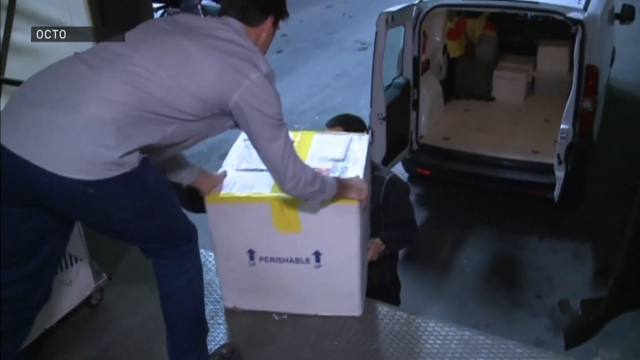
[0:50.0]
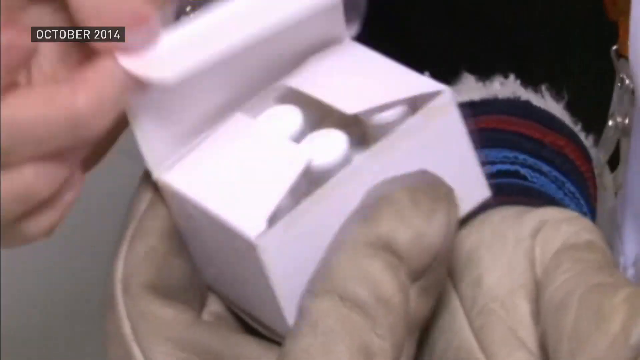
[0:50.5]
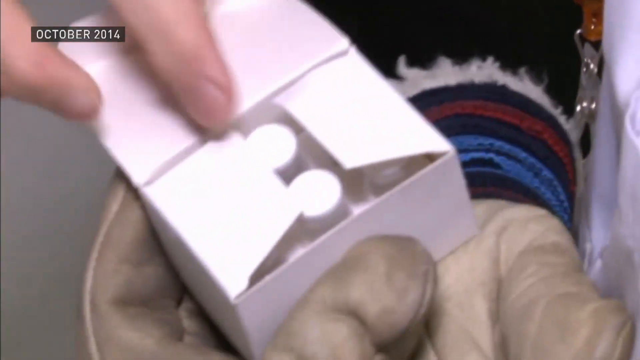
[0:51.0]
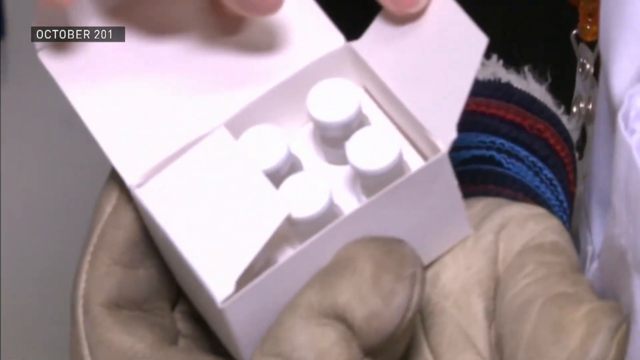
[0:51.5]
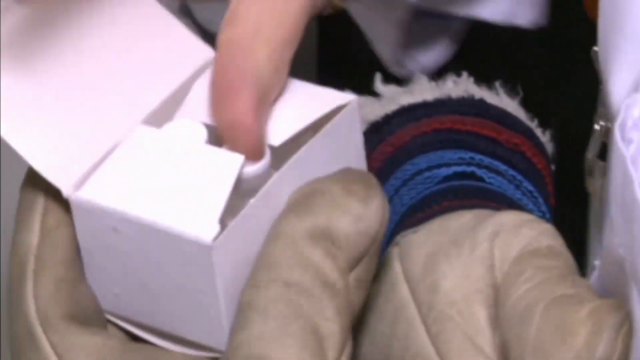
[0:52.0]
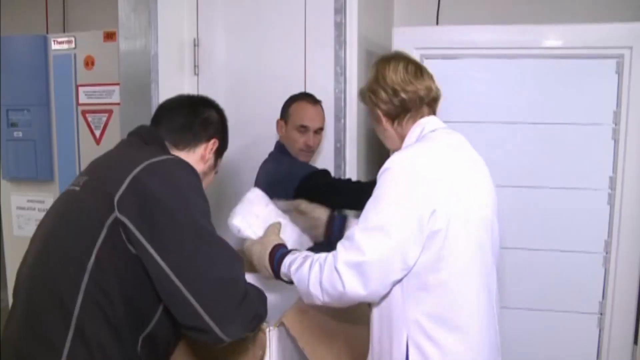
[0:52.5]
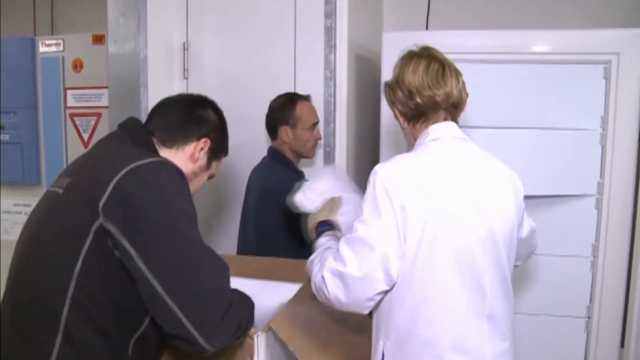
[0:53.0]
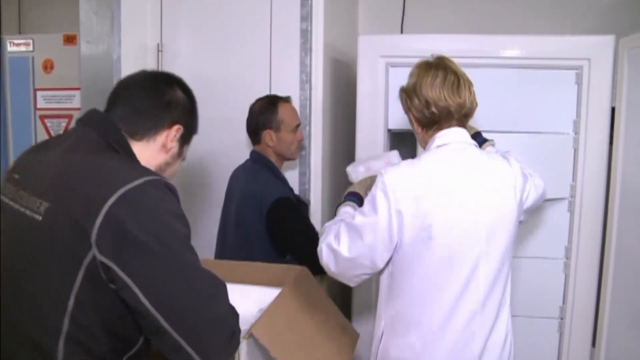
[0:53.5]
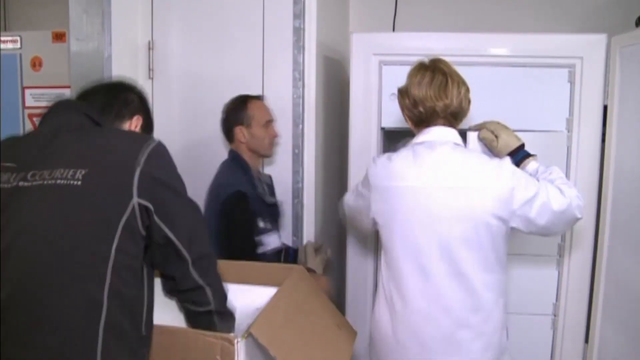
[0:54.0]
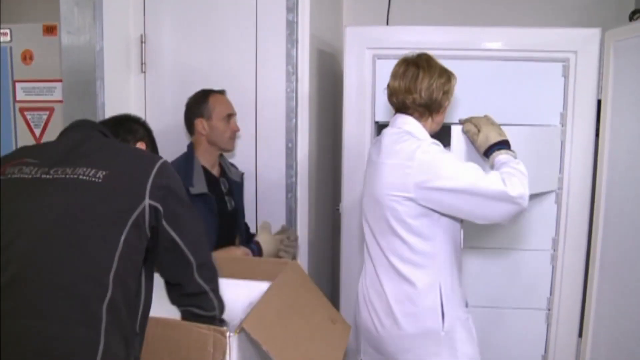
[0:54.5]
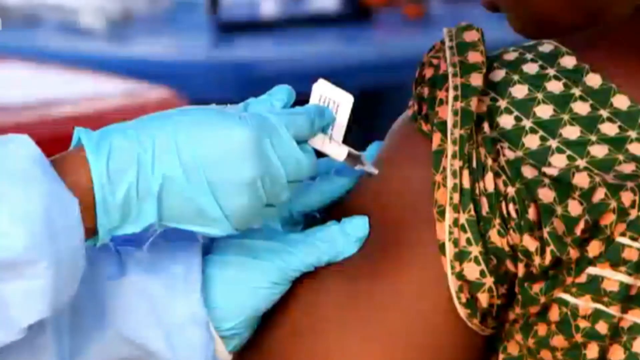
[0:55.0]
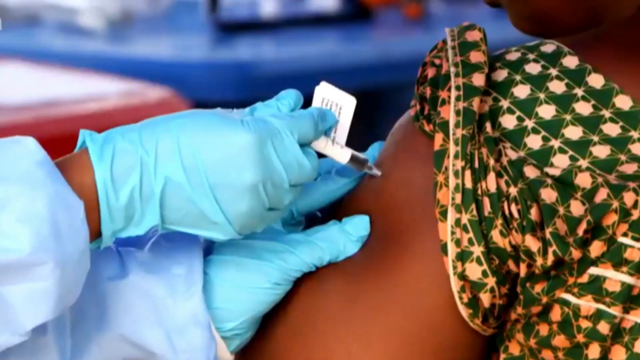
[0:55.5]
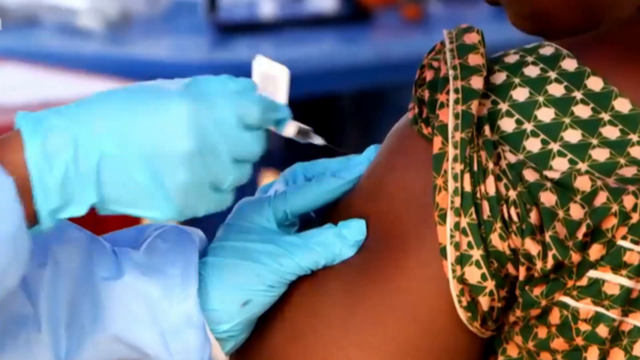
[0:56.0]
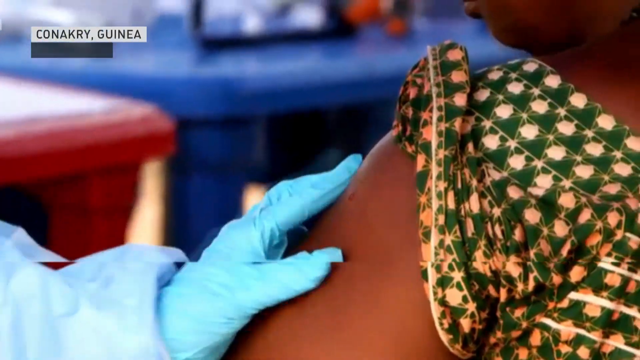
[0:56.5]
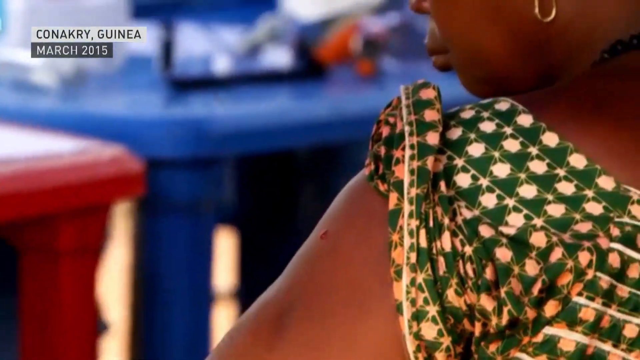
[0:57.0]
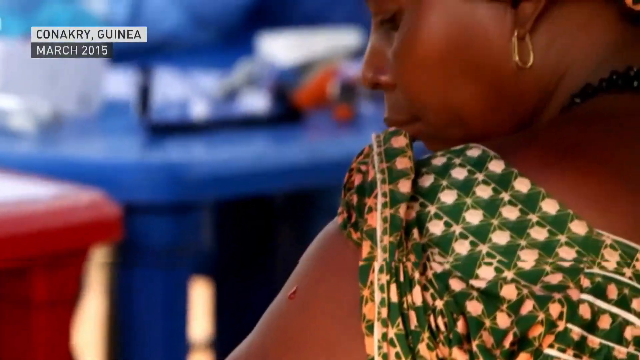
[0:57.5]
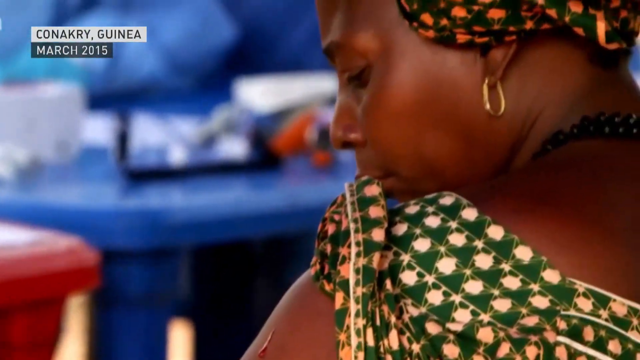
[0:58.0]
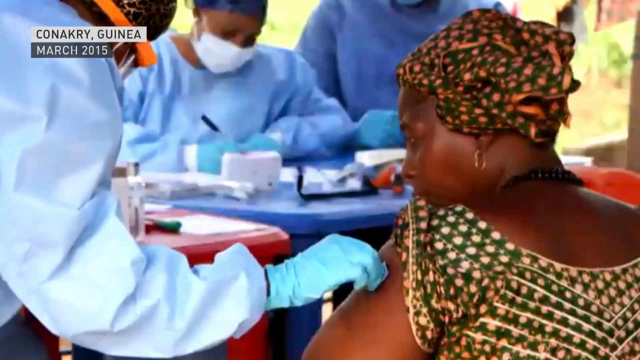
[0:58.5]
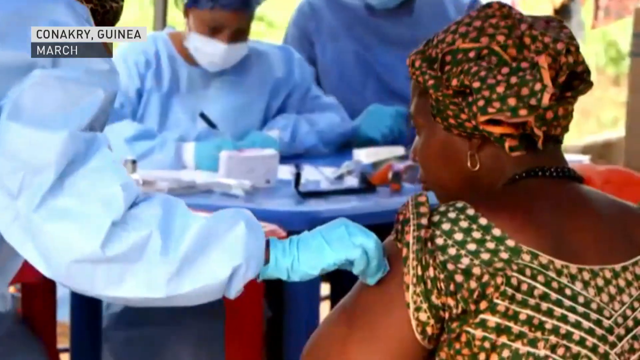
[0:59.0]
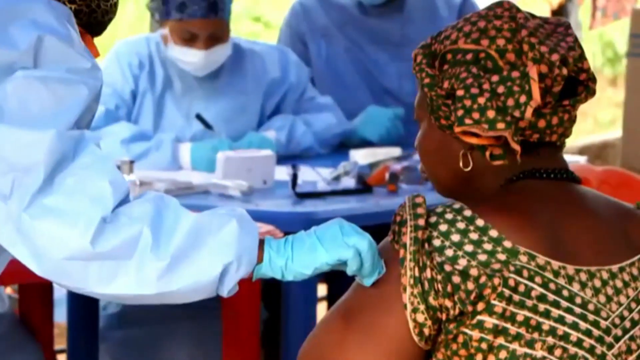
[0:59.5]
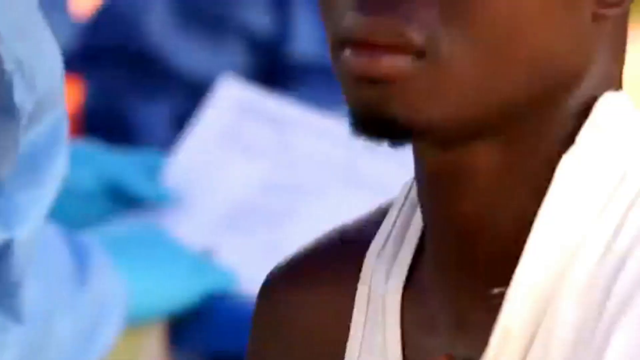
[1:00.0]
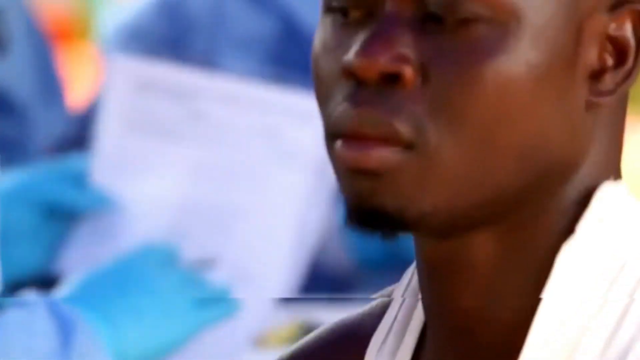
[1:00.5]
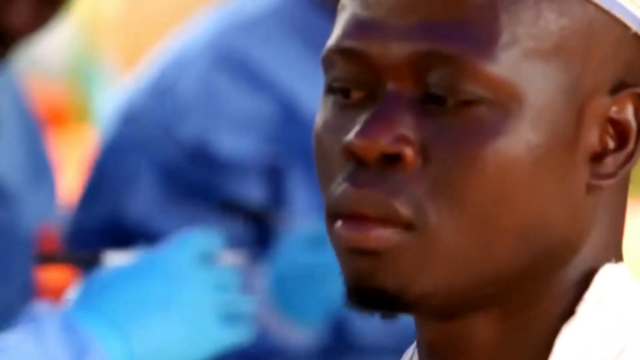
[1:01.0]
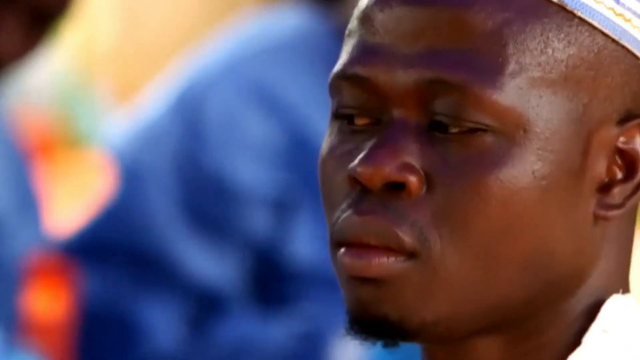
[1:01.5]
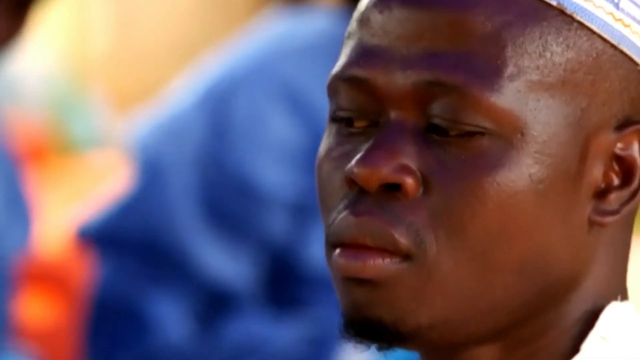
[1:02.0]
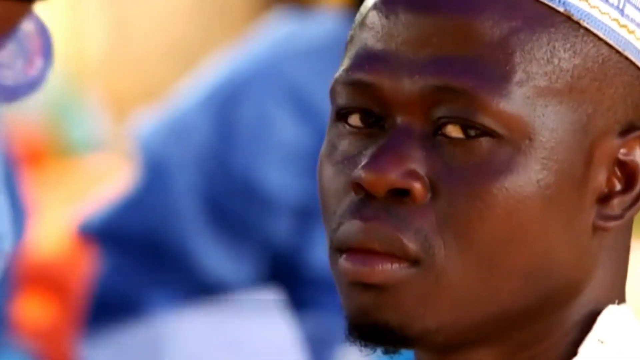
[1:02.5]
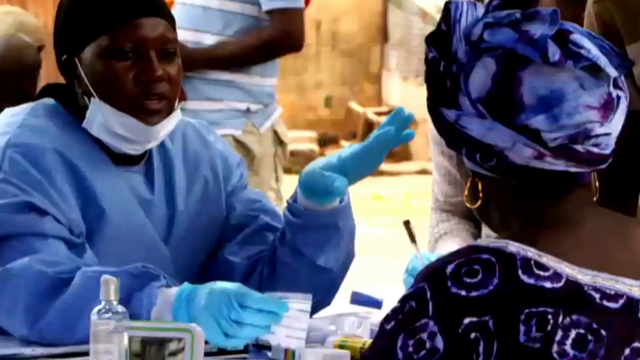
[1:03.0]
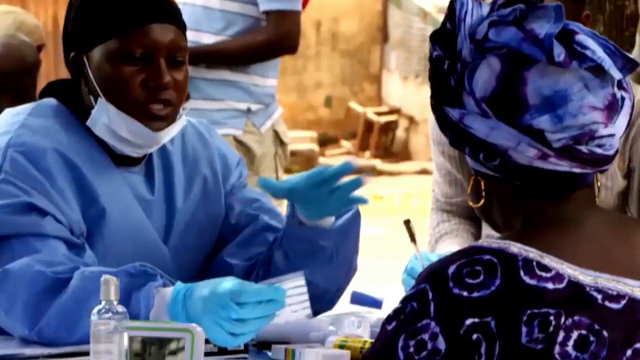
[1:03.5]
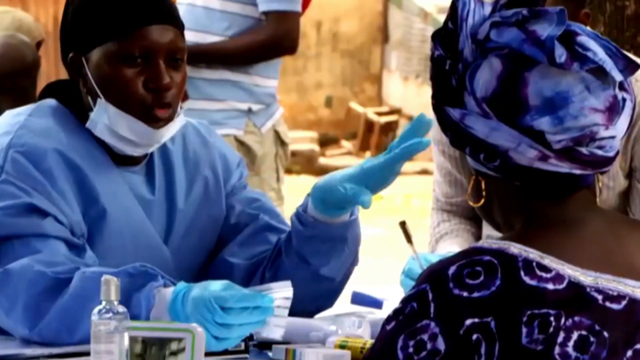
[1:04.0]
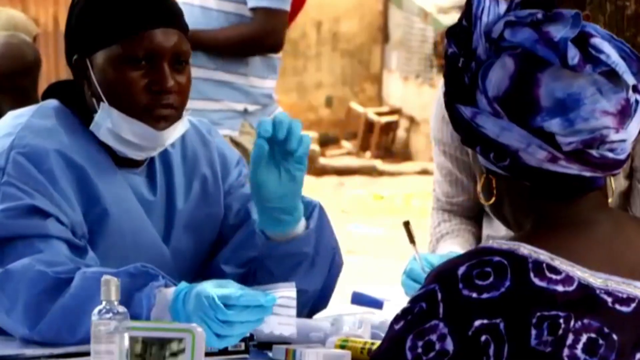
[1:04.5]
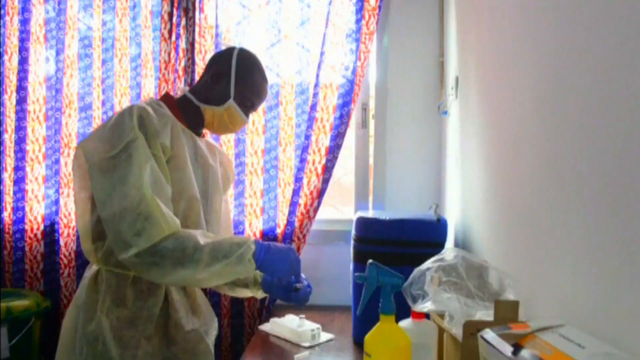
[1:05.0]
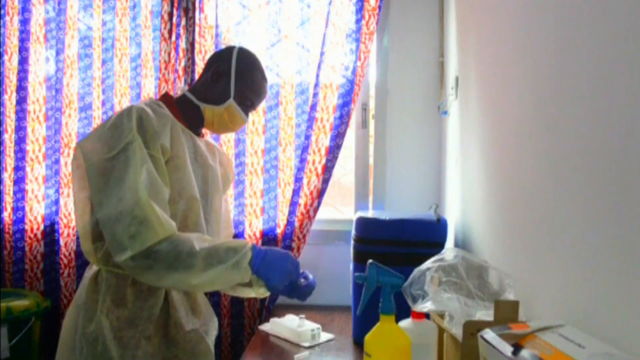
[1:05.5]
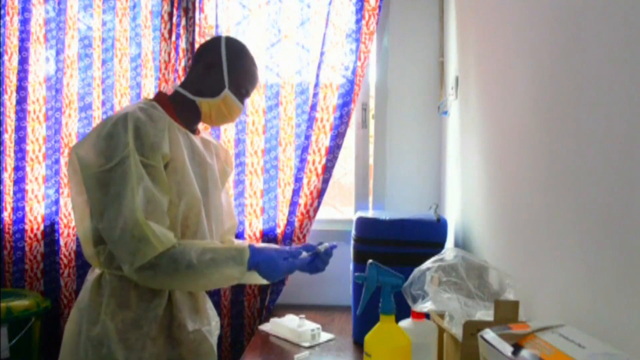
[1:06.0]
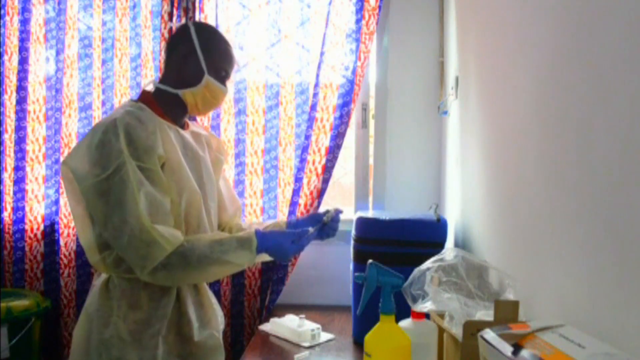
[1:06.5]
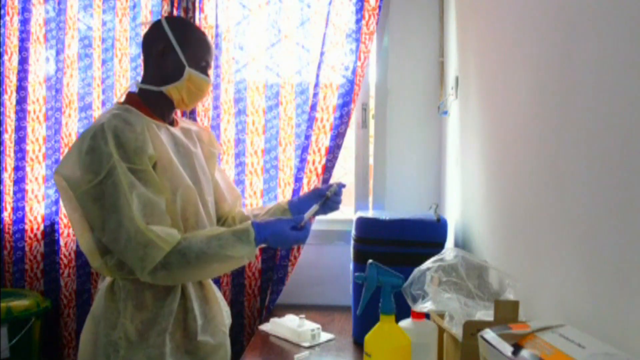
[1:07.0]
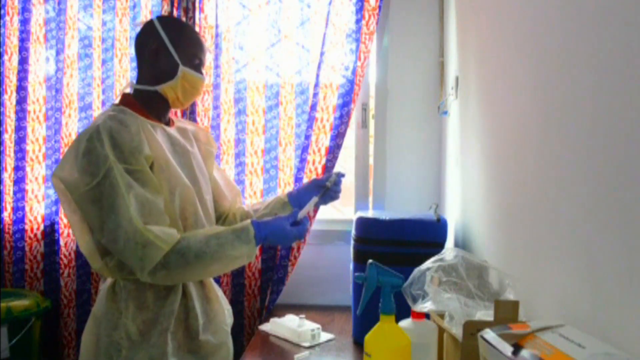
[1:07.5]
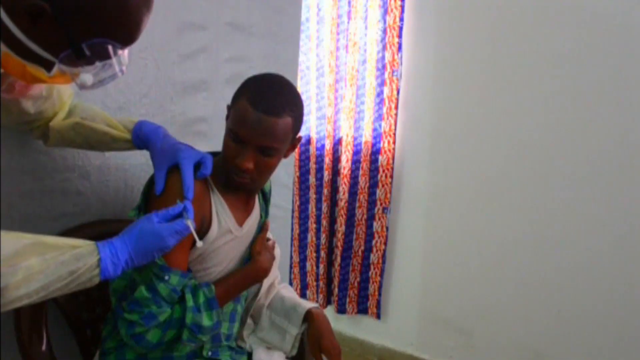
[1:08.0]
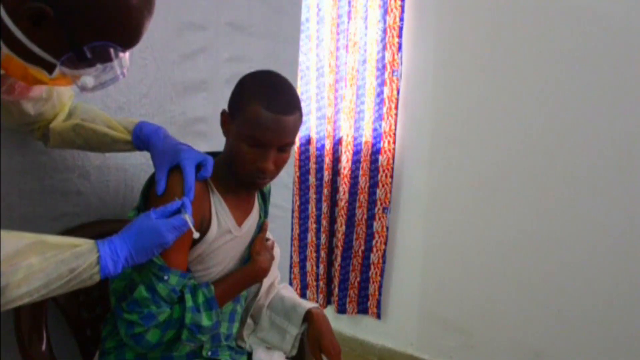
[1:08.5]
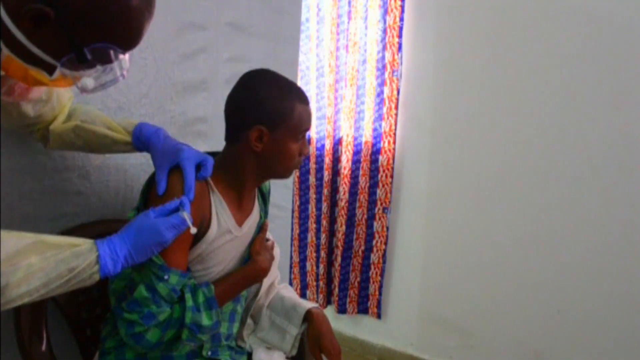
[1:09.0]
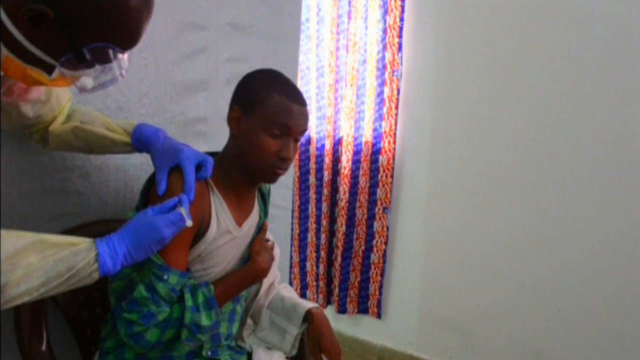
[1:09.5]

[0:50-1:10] People load a truck, and then a hand opens a box with vials inside. People load the smaller boxes into what looks to be a fridge. Someone wearing blue gloves gives a shot into a person's arm. Many other people in protective gear give people shots, and some of them appear to be talking to patients. People wearing masks seem to be drawing from the vials and giving the shots into the patients' arms. In the upper left corner, the place, time and date come up on the screen.